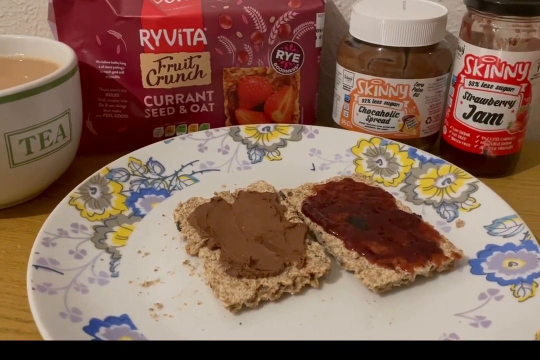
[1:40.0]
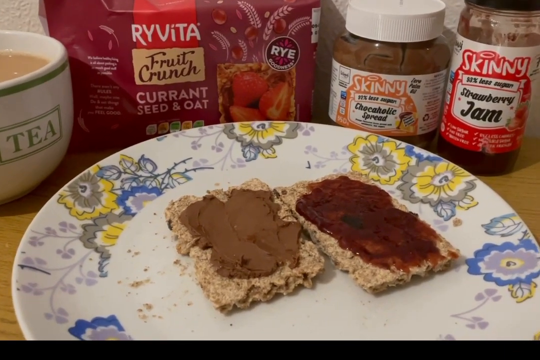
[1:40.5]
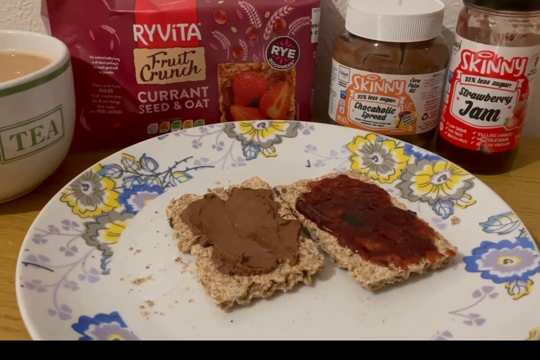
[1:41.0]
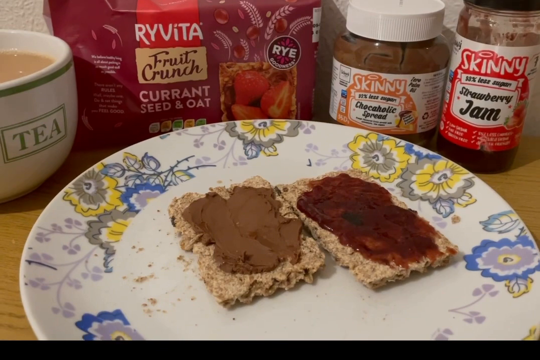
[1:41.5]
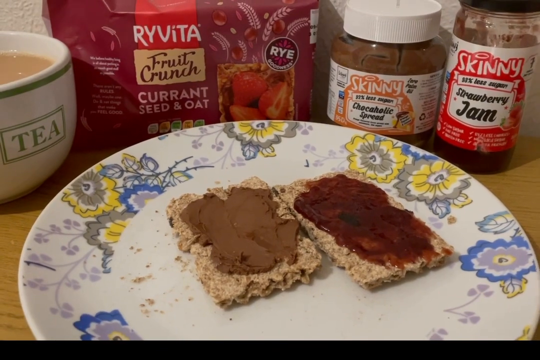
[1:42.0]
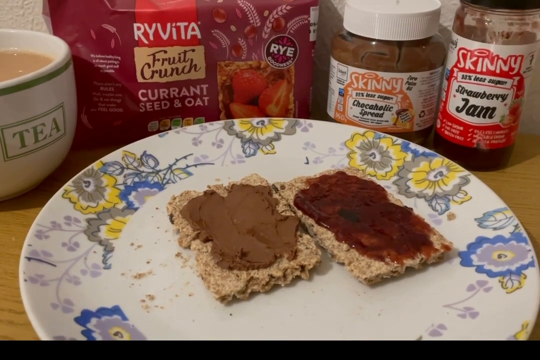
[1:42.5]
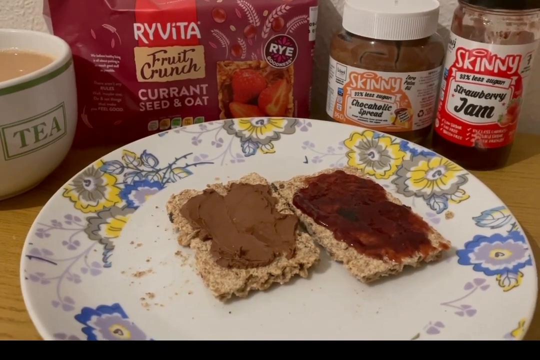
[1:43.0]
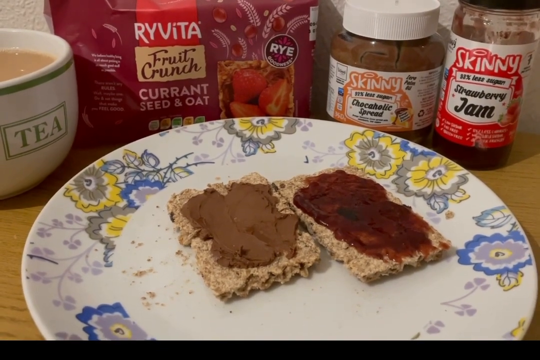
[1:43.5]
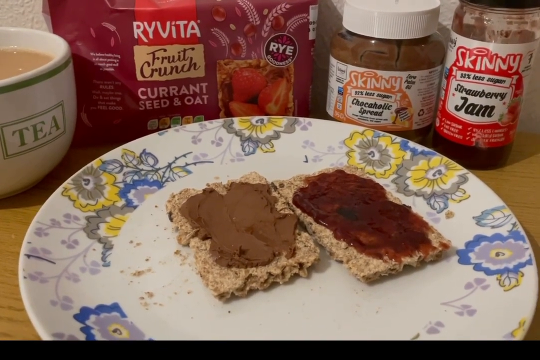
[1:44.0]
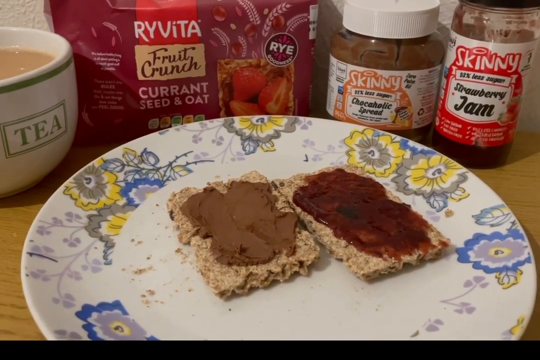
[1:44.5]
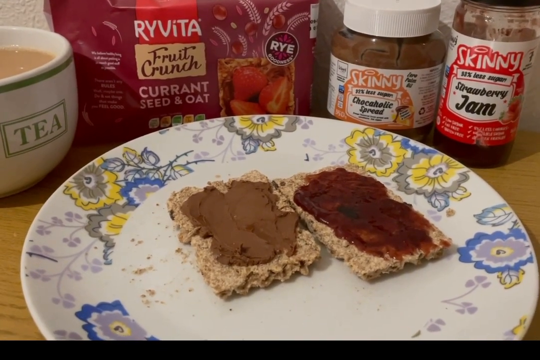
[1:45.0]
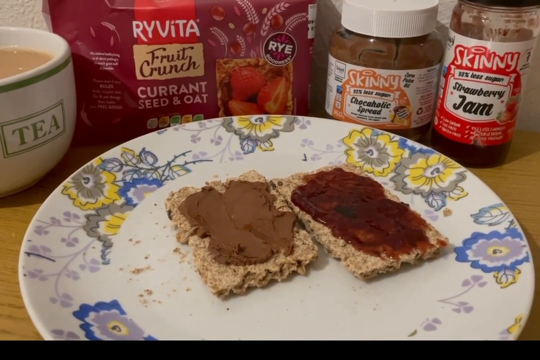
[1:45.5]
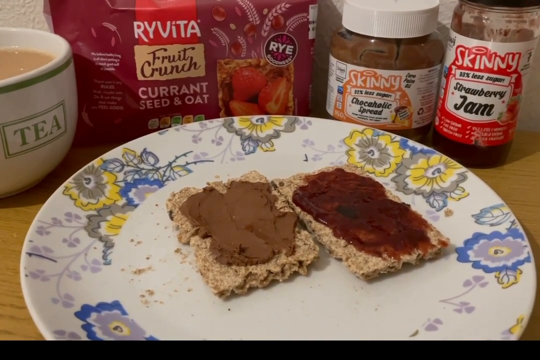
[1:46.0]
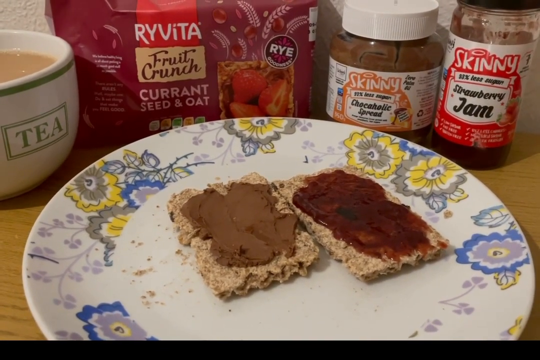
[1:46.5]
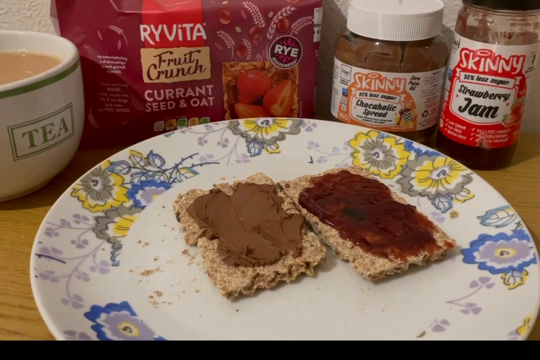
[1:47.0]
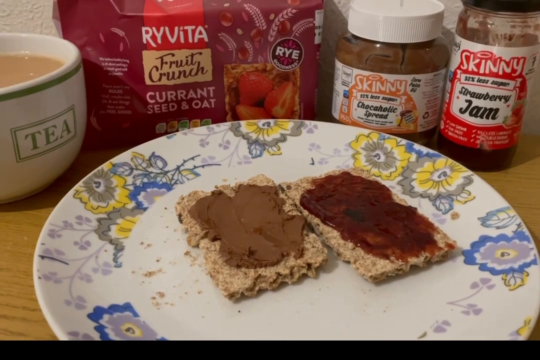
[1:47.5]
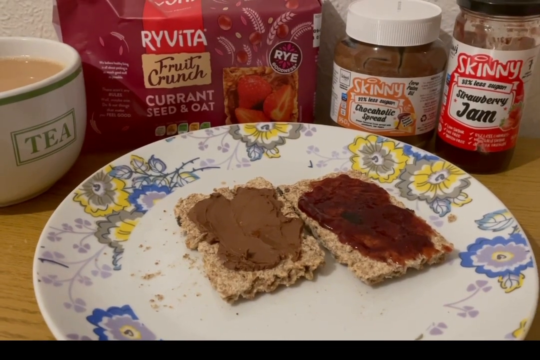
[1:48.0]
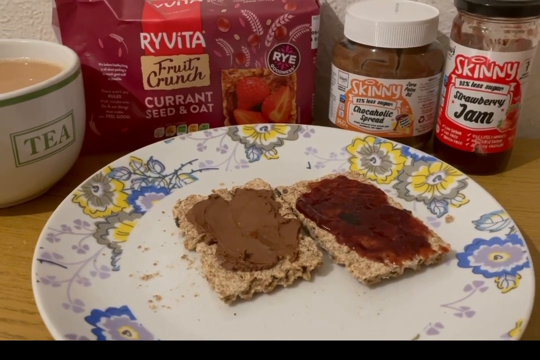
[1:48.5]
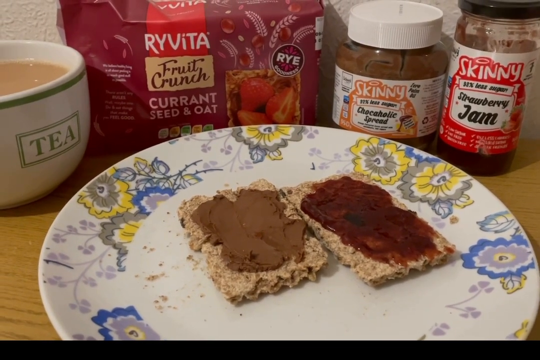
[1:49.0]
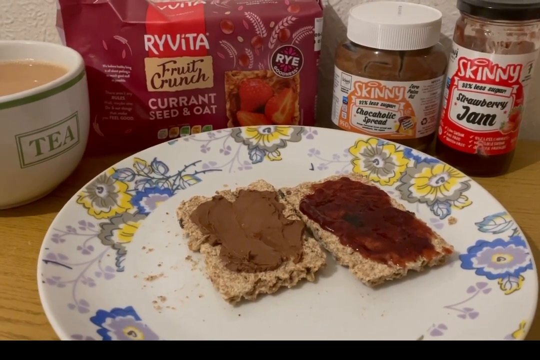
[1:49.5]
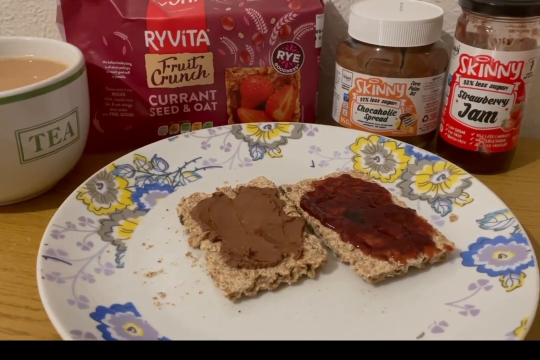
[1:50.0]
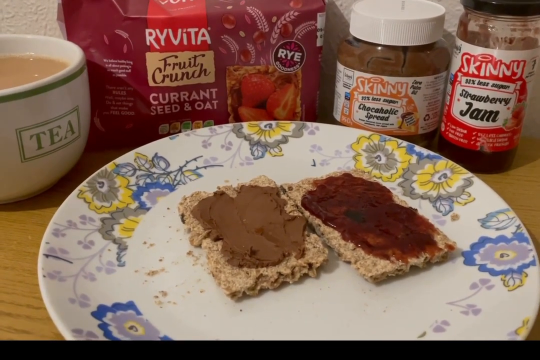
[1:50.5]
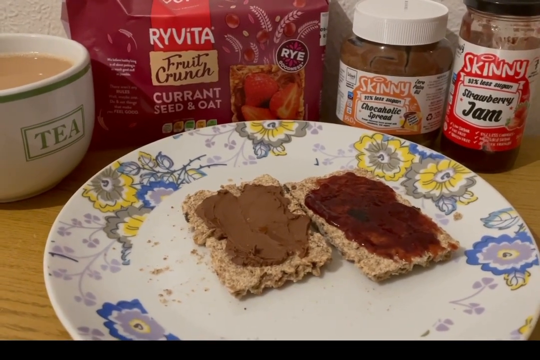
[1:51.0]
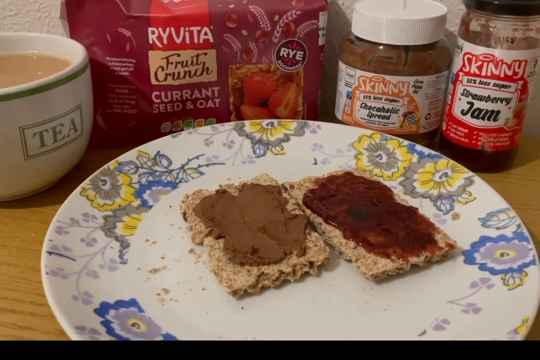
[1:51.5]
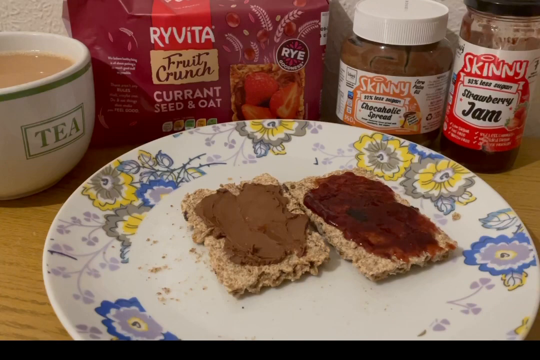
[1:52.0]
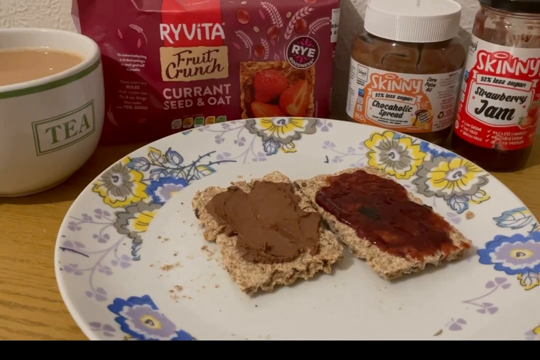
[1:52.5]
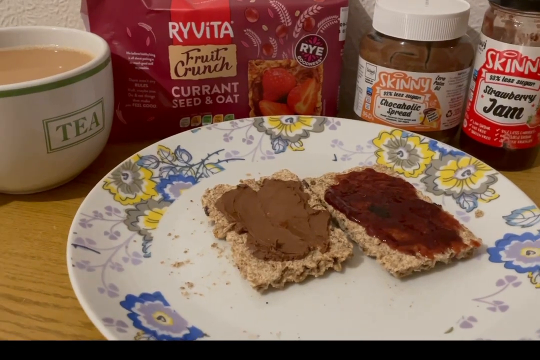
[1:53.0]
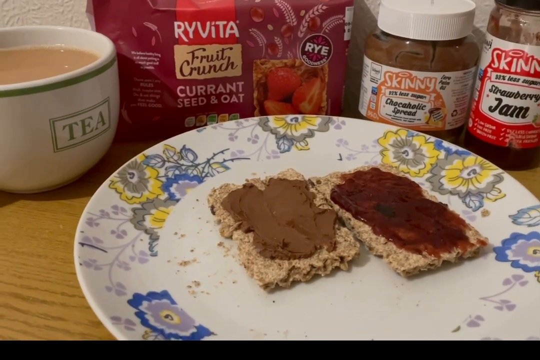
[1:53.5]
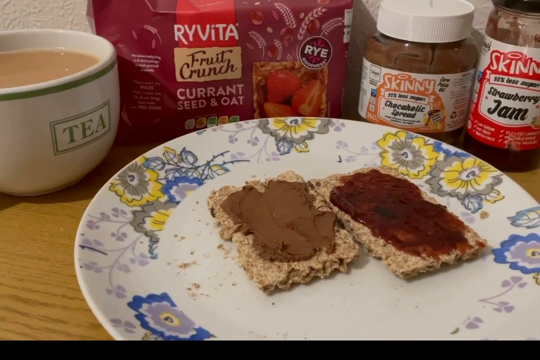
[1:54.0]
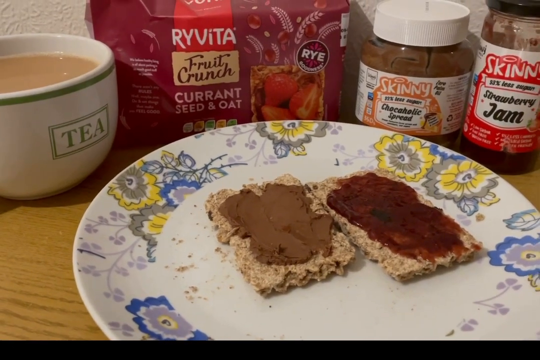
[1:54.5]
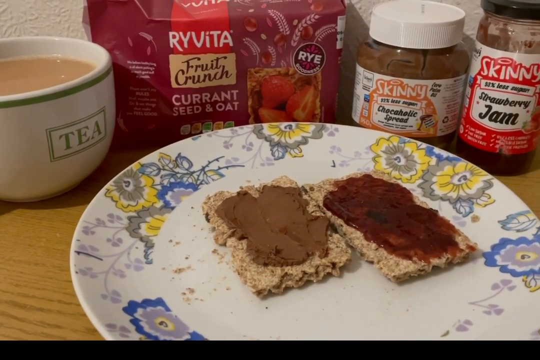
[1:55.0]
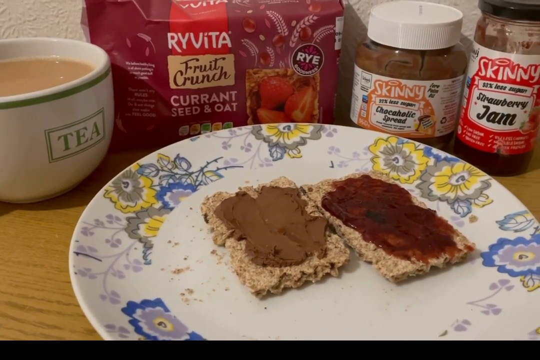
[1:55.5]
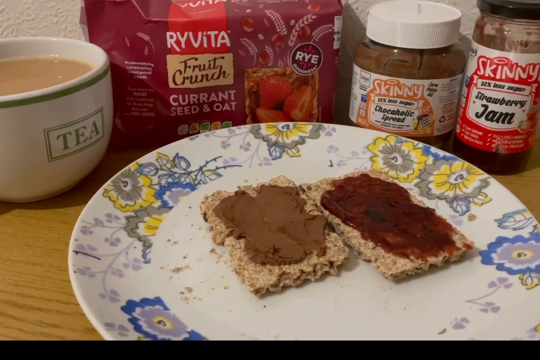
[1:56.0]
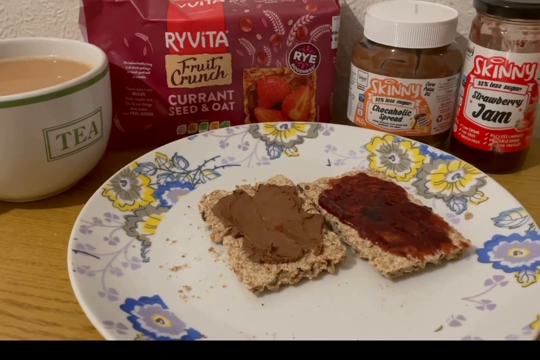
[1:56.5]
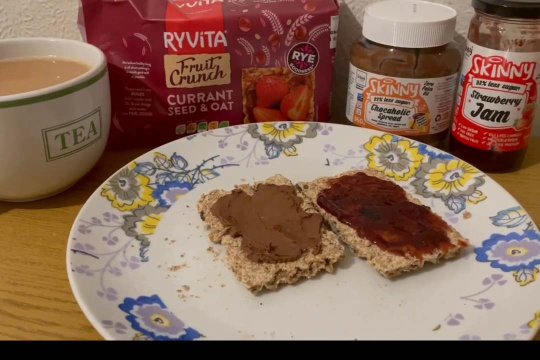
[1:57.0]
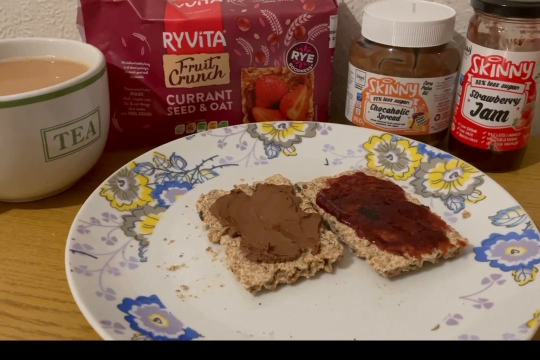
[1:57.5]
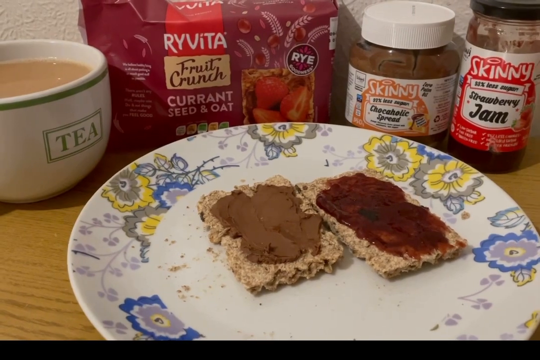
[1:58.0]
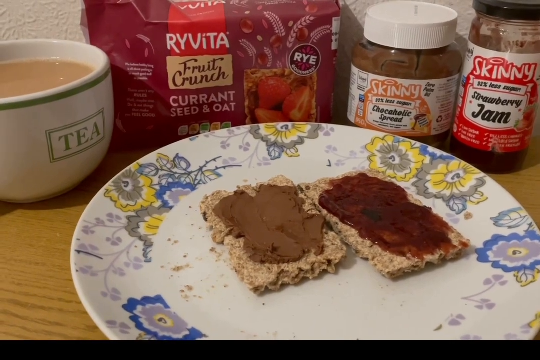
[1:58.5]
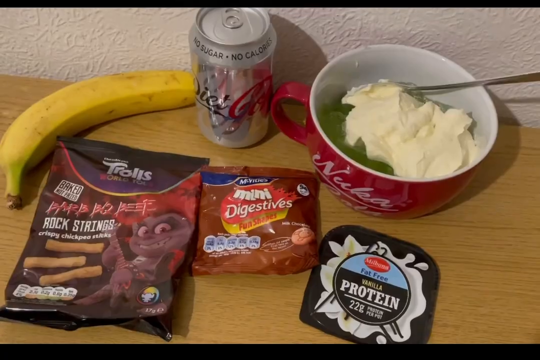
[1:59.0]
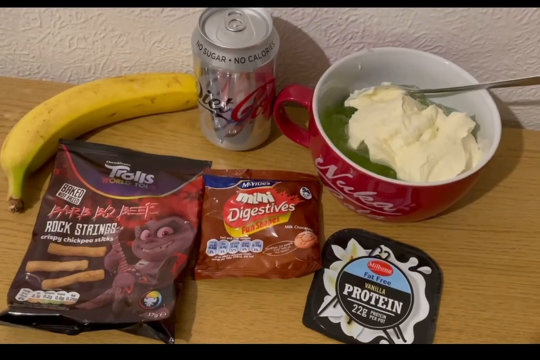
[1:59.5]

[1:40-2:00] The view moves back to a broader shot of the Ryvita on the plate, where the black lid of the jam jar can just about be seen in the corner; as the camera moves slightly, less of it is visible, and then more. The full "tea" label on the side of the cup is visible again, along with the light brown tea in the cup. The video then moves to another image on the same worktop with the same wall behind. Here there is another red cup containing what might be cream, vanilla protein cream and jelly, with something green in it that cannot really be made out. In the background at the top centre is a Diet Coke tin with "no sugar no calories" around the rim, and next to it is a banana. Below that are two packets of snack treats.